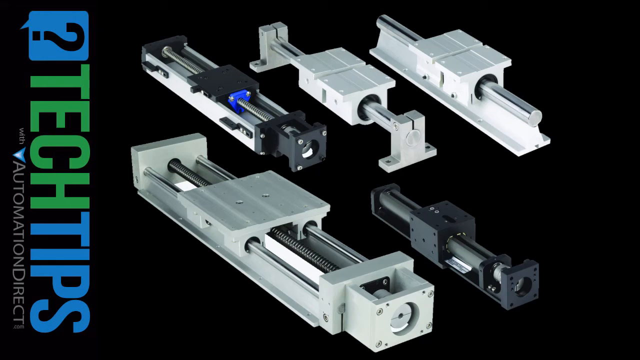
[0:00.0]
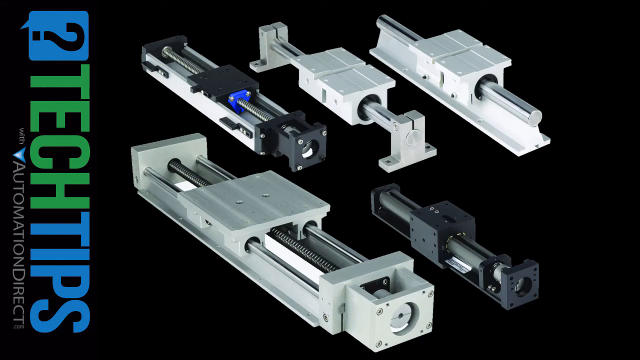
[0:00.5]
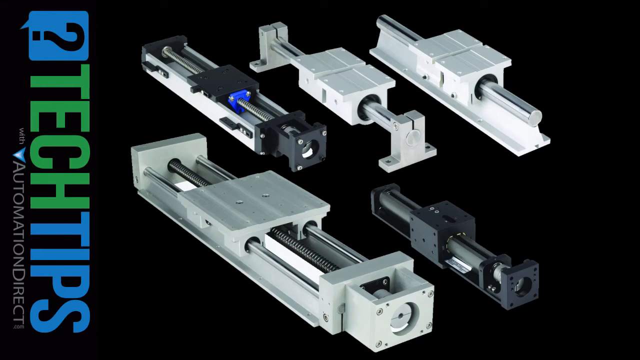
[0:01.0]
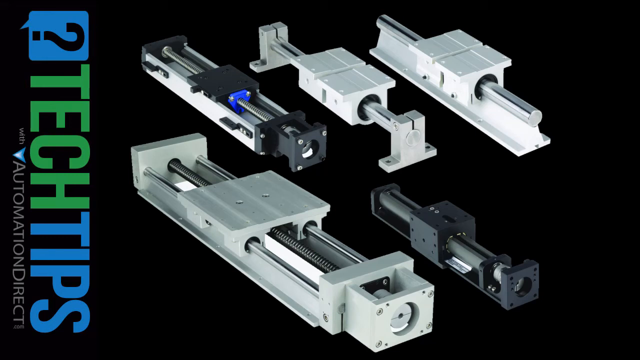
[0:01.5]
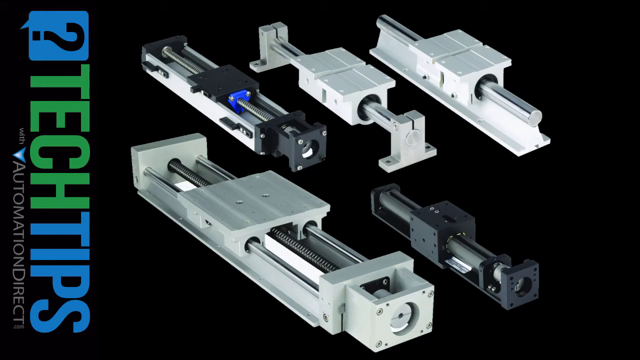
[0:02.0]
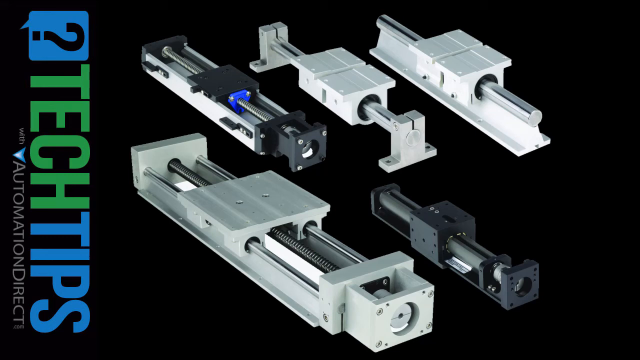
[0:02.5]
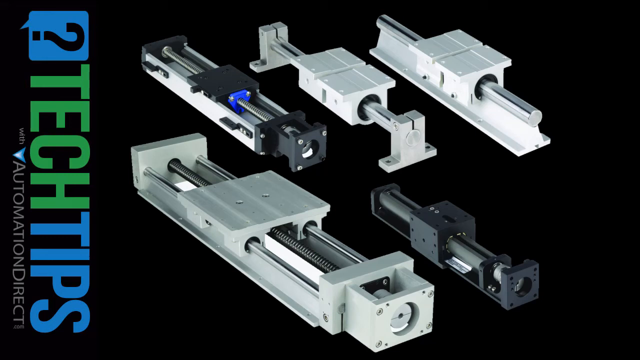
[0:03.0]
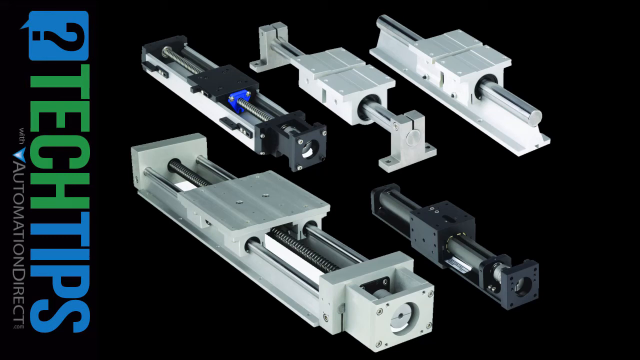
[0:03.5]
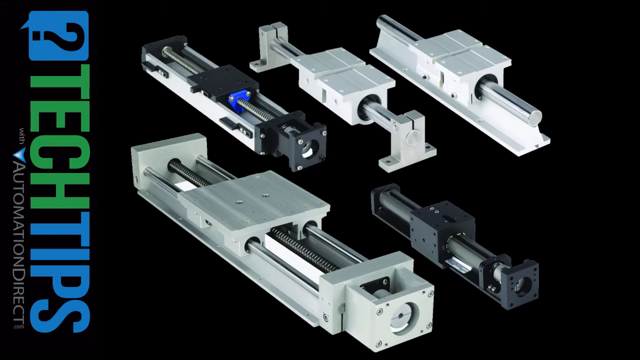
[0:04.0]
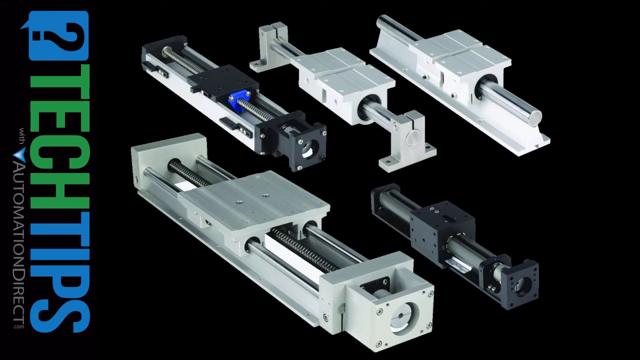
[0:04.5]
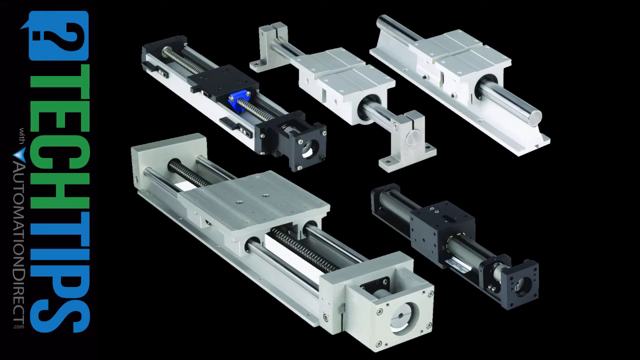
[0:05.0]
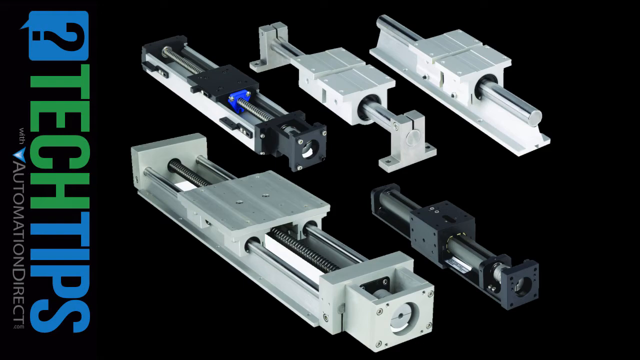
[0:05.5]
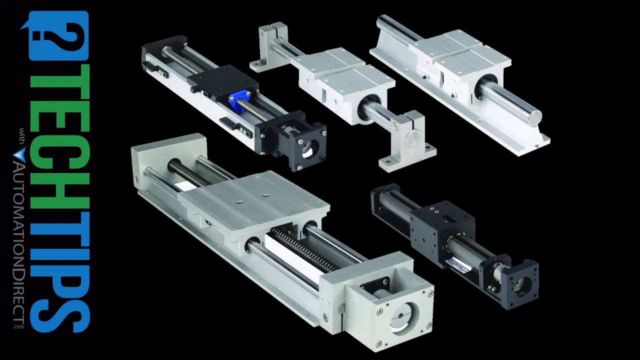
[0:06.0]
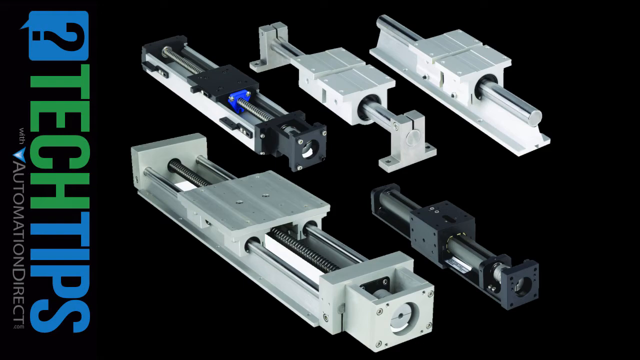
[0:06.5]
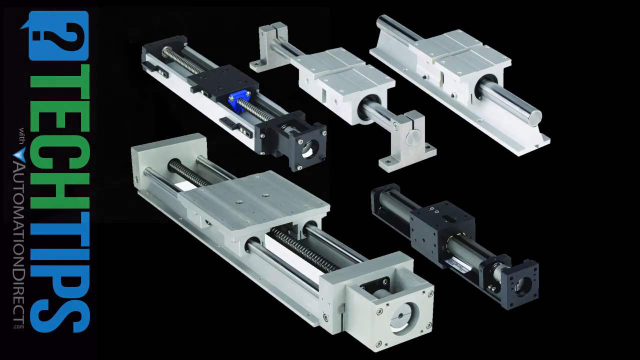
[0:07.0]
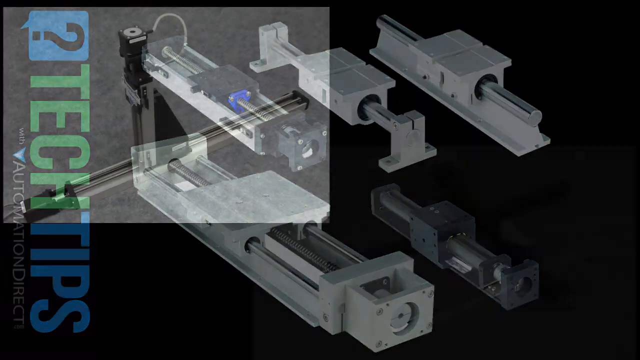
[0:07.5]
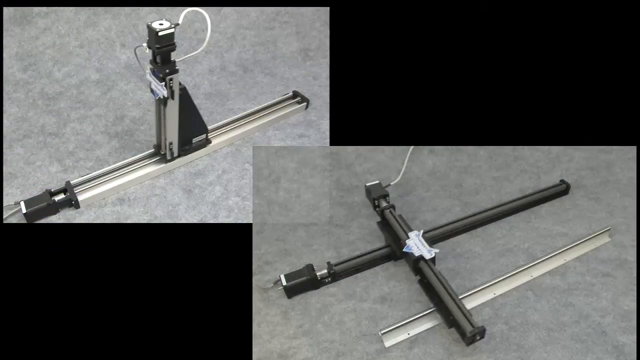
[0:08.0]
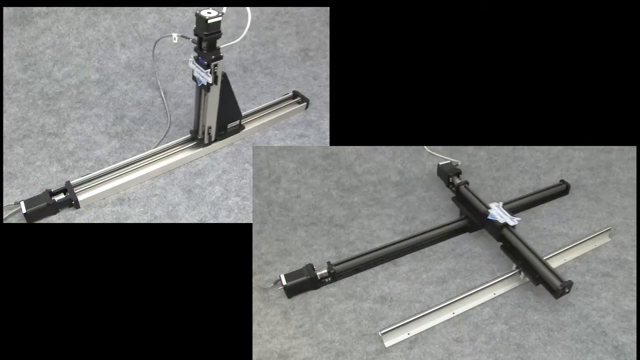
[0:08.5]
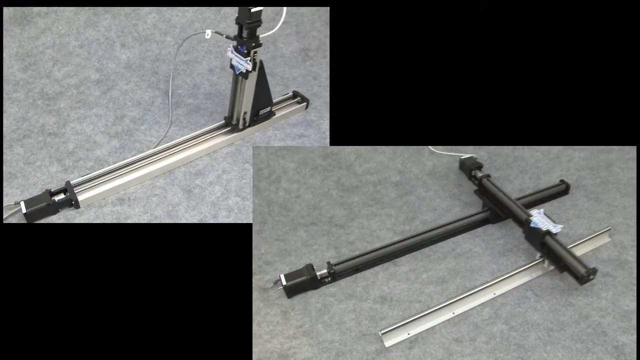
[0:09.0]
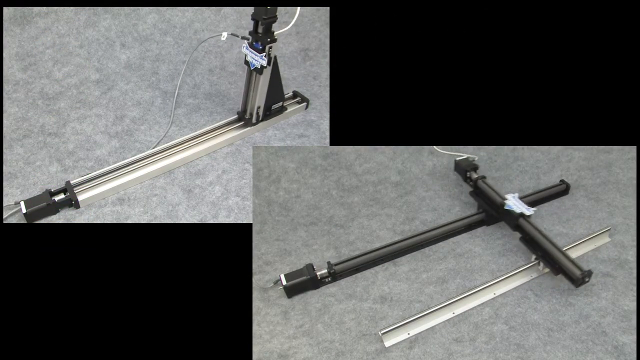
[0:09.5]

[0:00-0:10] Several components appear to be working together like robots toward the end of the screen. Two different types of rods are set perpendicular to each other at a 90-degree angle, with one rod moving up and down the other rod. The main color of the rods is silver.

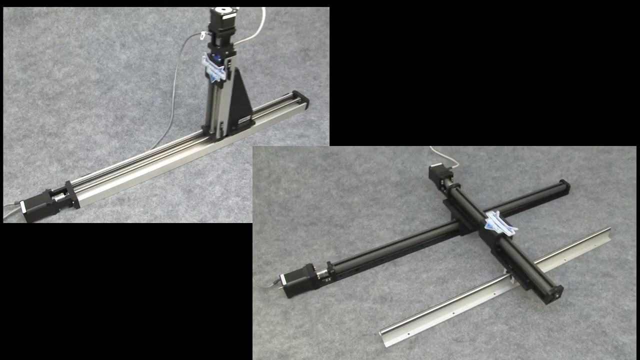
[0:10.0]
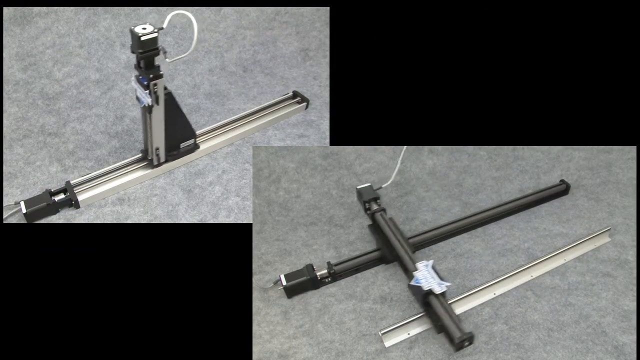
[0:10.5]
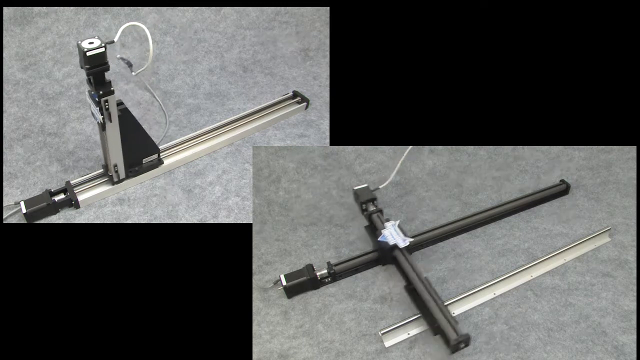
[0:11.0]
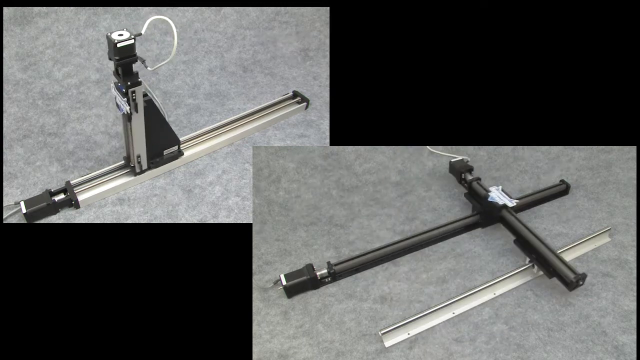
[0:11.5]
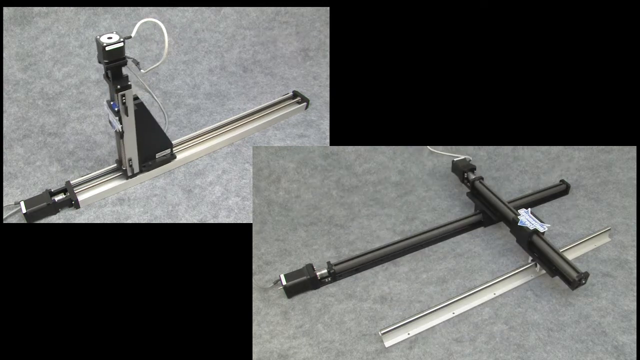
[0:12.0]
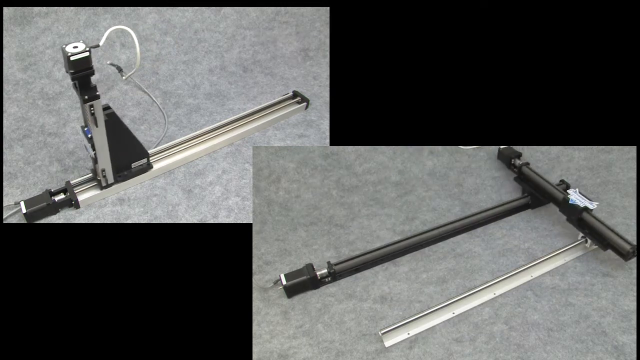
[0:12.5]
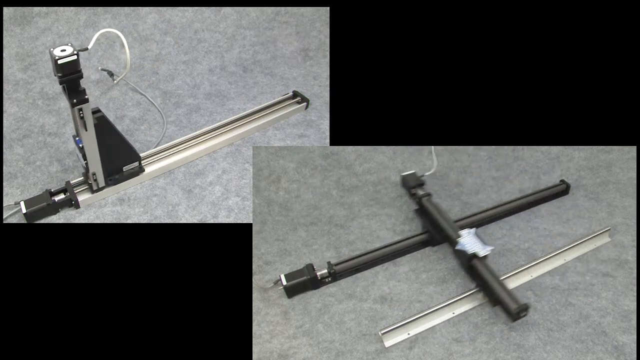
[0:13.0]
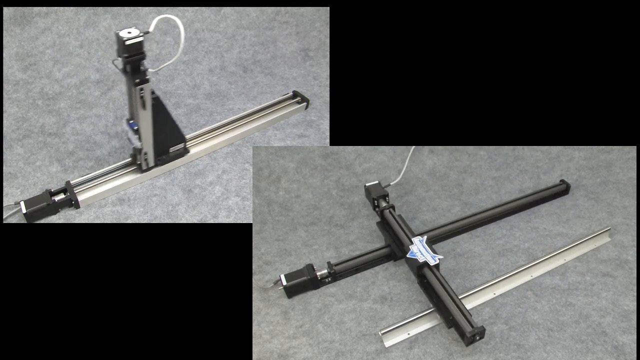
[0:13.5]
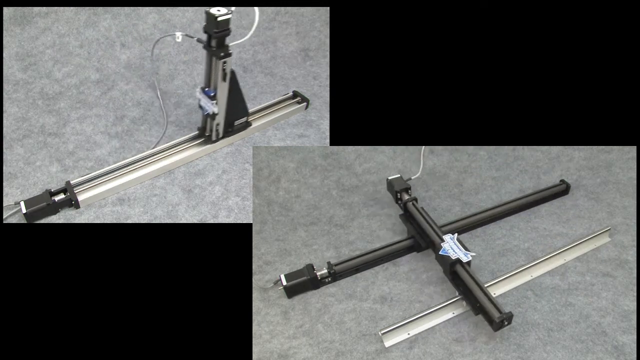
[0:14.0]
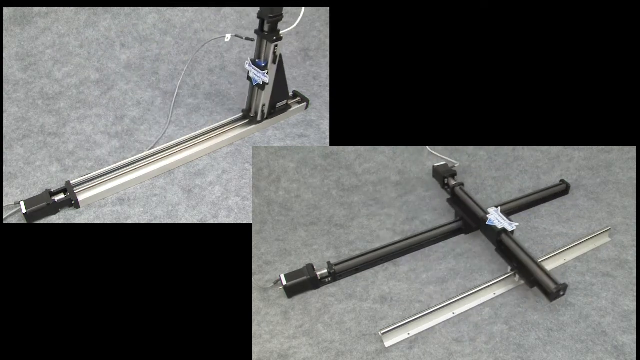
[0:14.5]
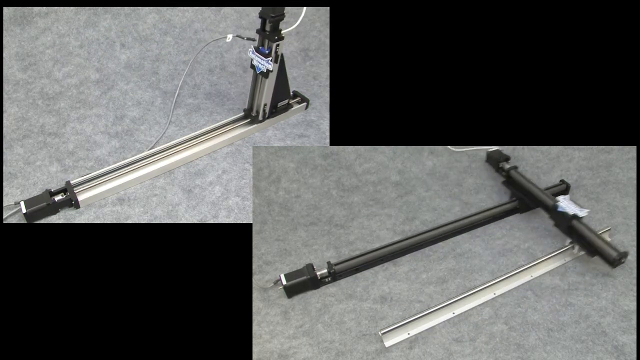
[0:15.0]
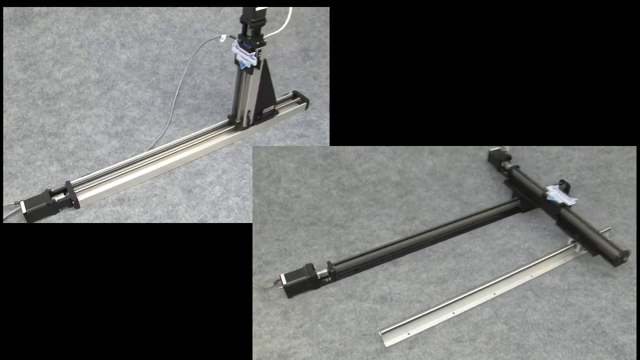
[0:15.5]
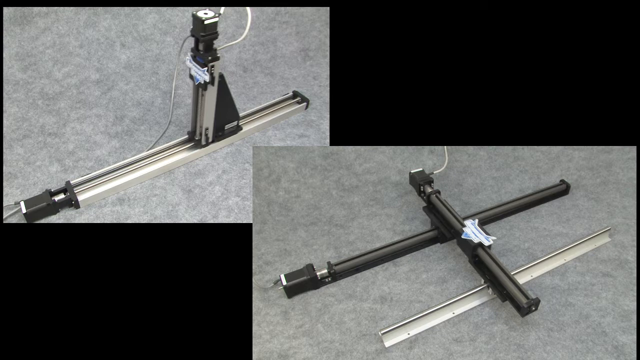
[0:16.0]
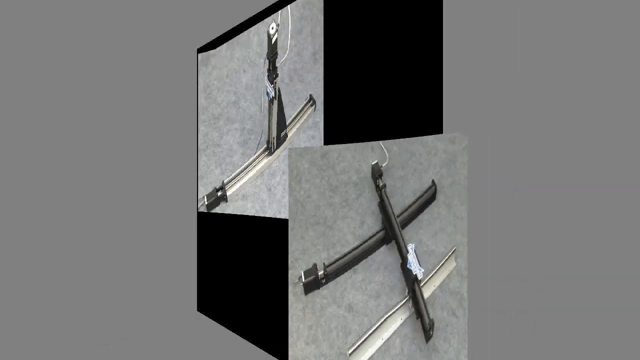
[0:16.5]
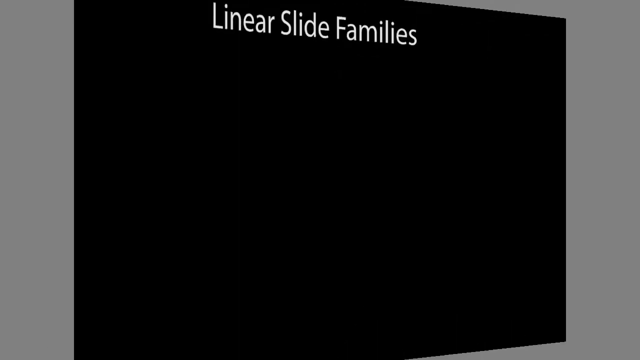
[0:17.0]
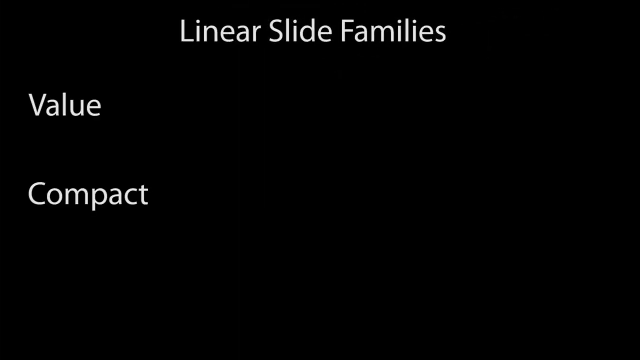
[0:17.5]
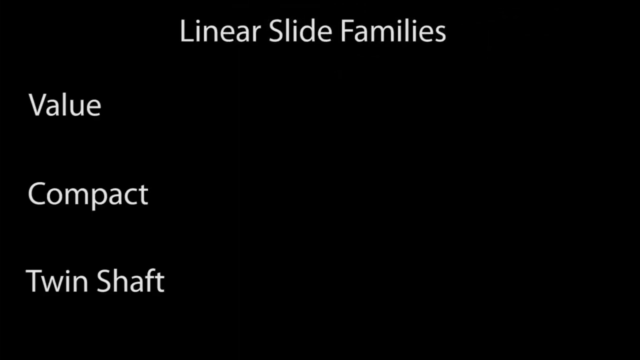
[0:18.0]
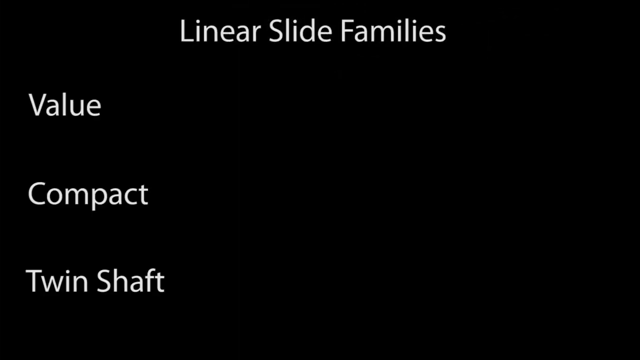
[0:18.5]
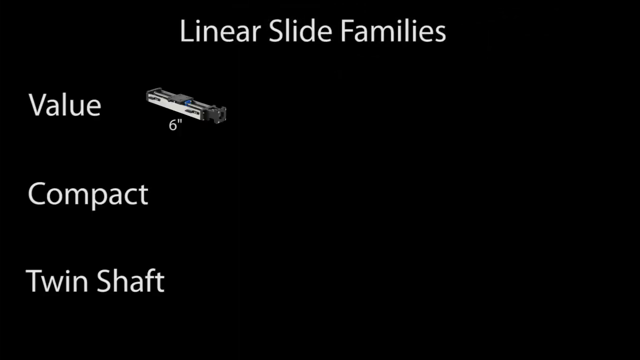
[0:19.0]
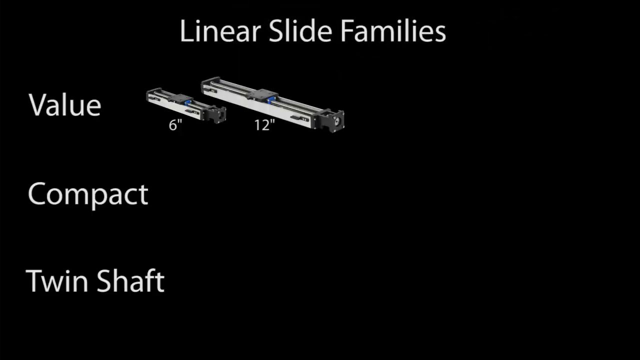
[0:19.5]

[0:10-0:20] The screen shows robotic linear slides sliding back and forth on a platform. The slides are perpendicular to each other and form a cross. A carpet is in the background, around the bottom.